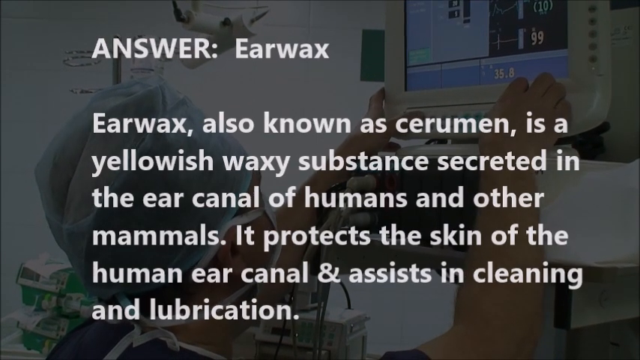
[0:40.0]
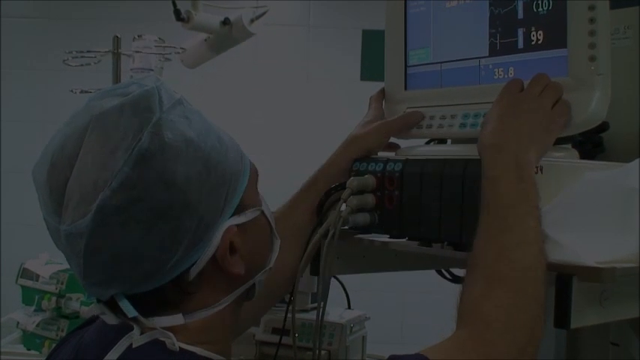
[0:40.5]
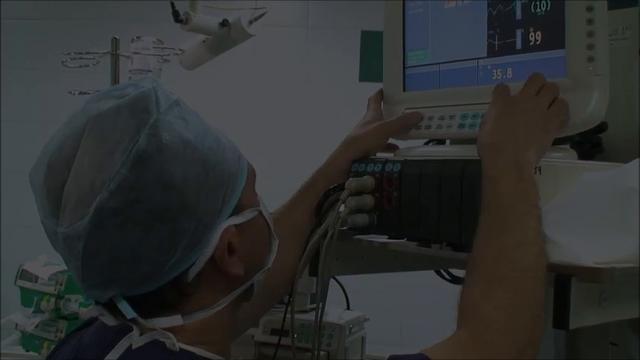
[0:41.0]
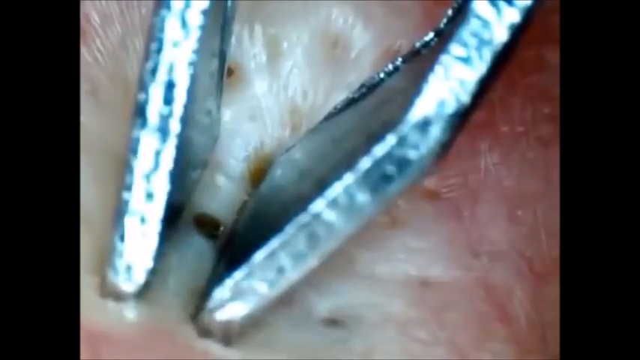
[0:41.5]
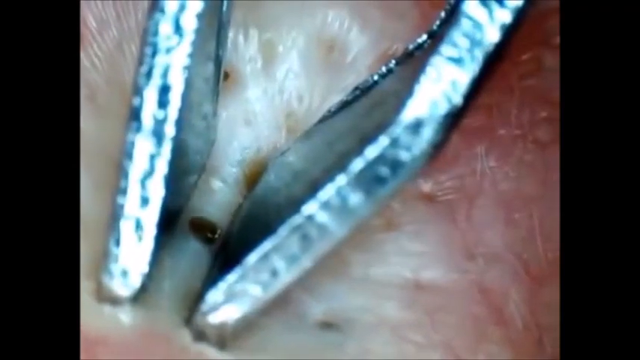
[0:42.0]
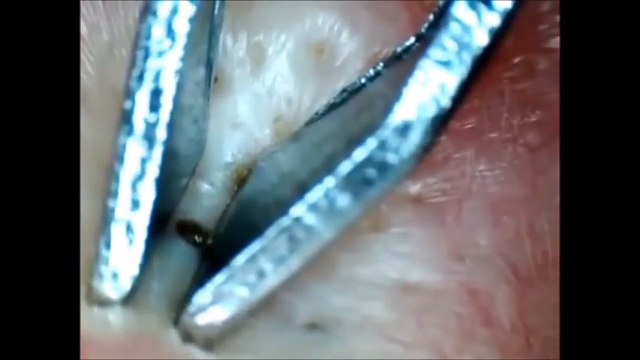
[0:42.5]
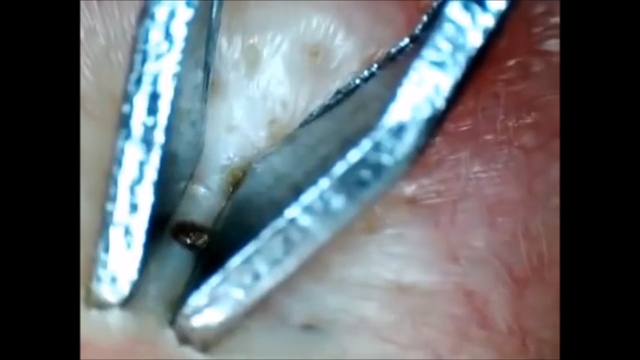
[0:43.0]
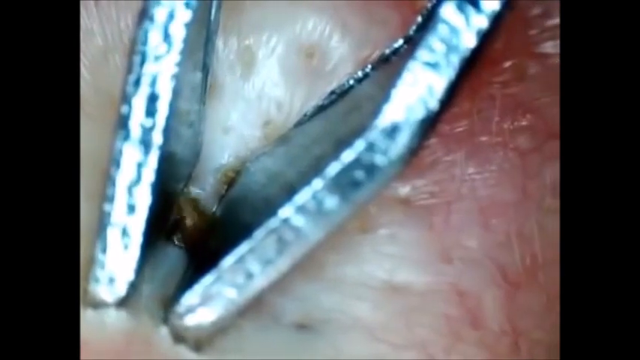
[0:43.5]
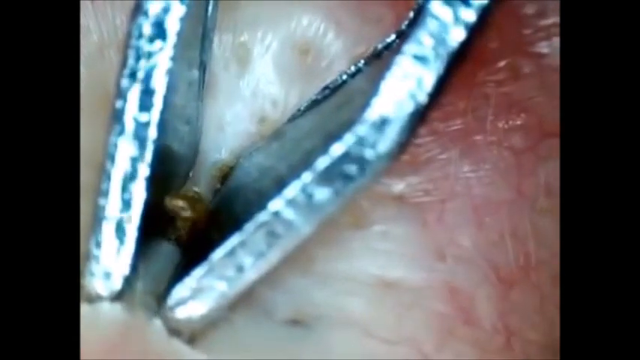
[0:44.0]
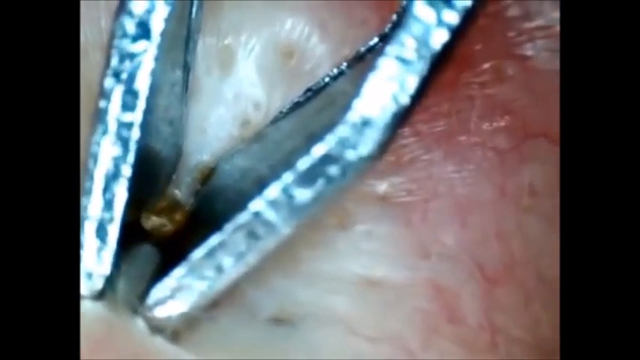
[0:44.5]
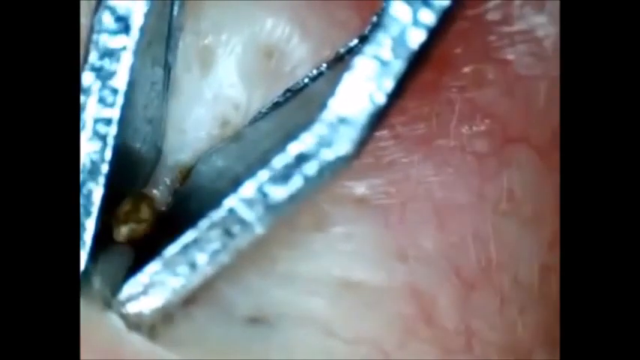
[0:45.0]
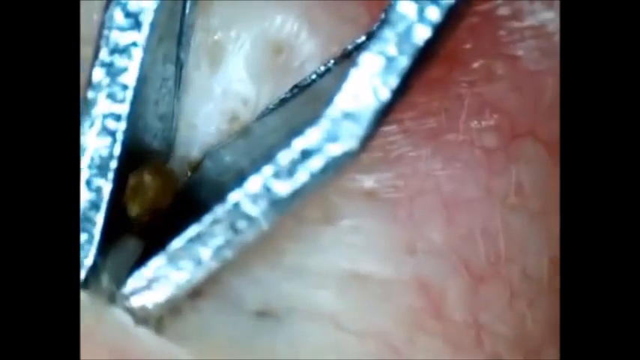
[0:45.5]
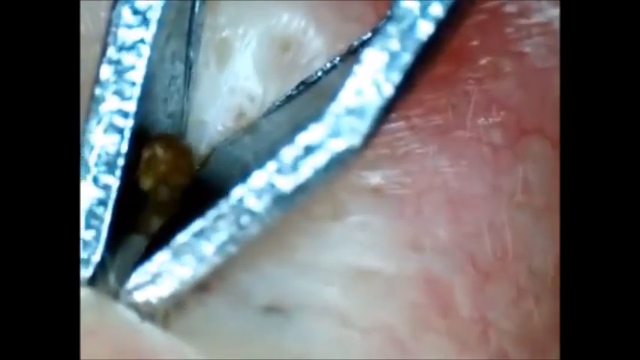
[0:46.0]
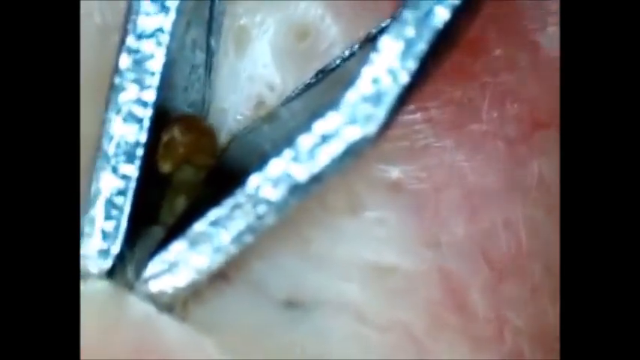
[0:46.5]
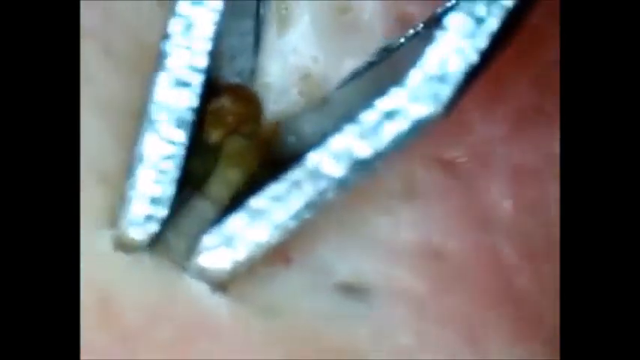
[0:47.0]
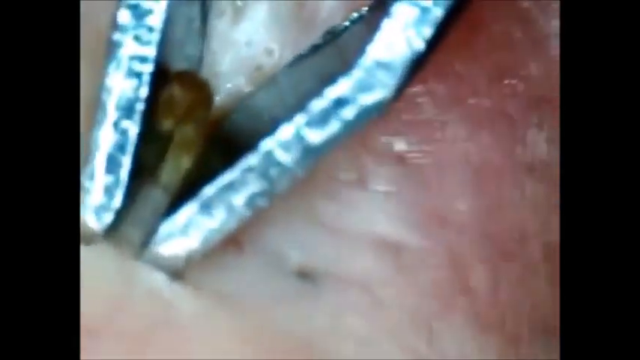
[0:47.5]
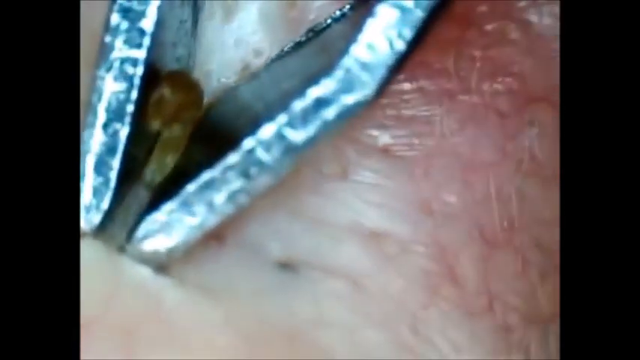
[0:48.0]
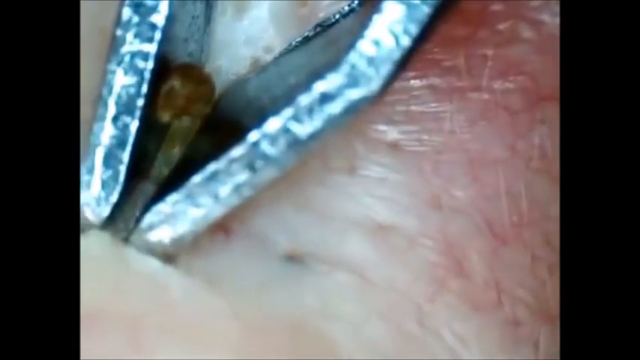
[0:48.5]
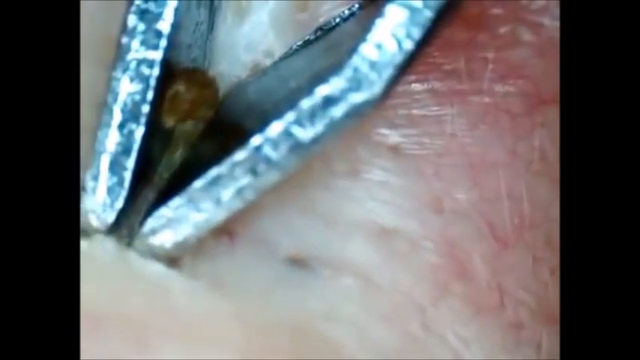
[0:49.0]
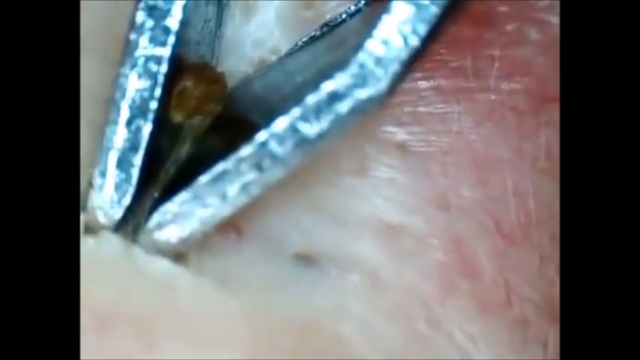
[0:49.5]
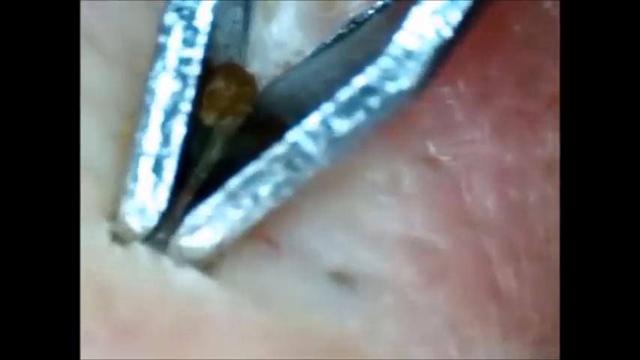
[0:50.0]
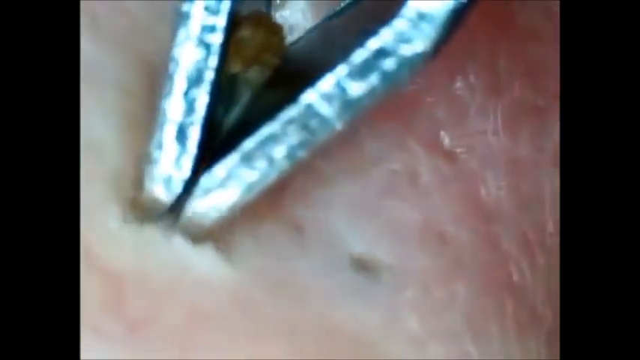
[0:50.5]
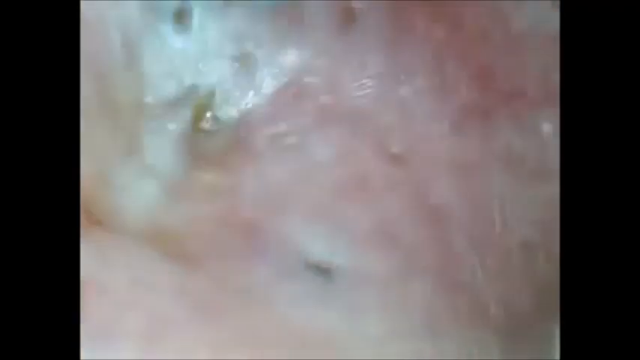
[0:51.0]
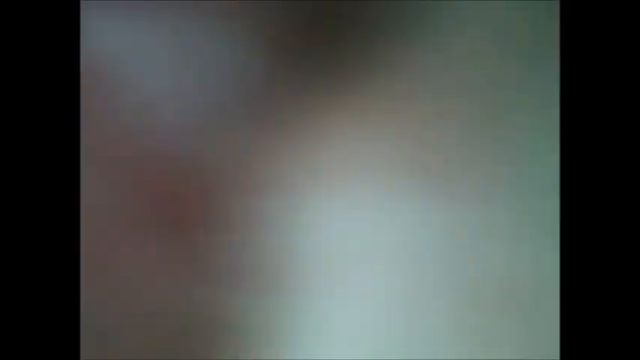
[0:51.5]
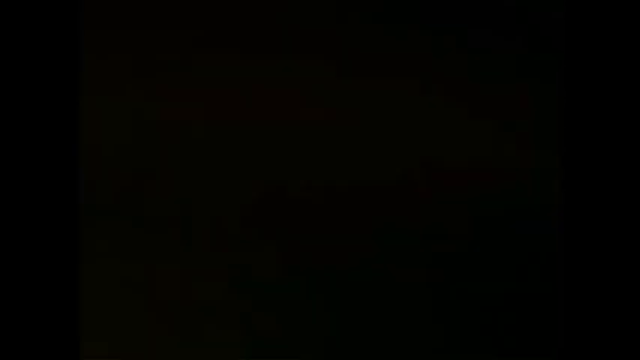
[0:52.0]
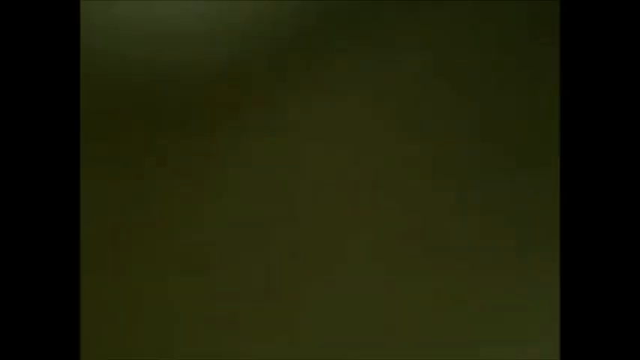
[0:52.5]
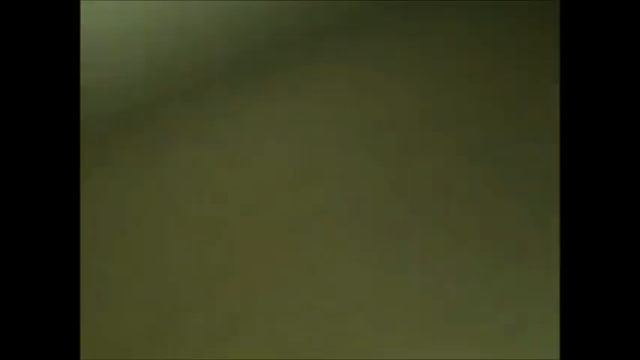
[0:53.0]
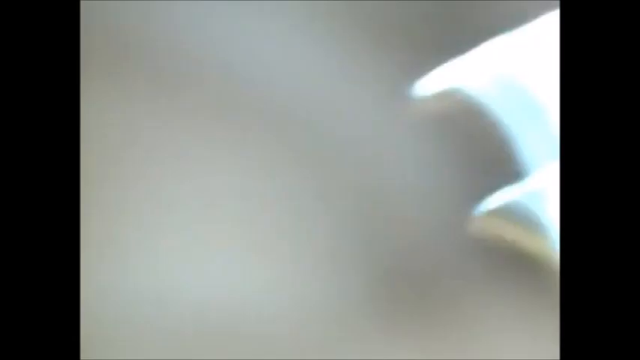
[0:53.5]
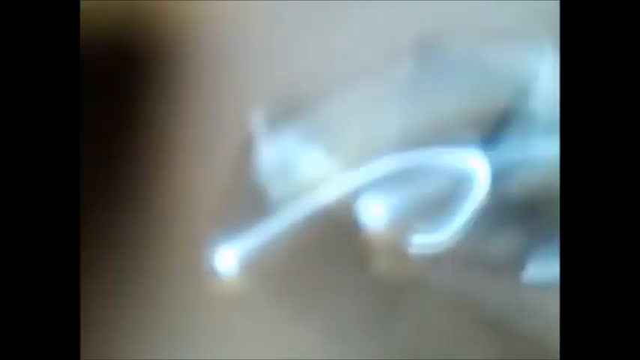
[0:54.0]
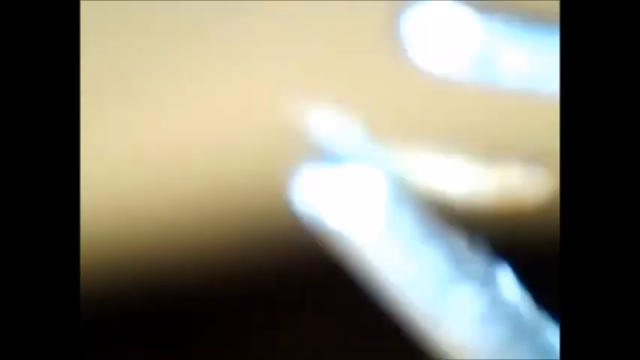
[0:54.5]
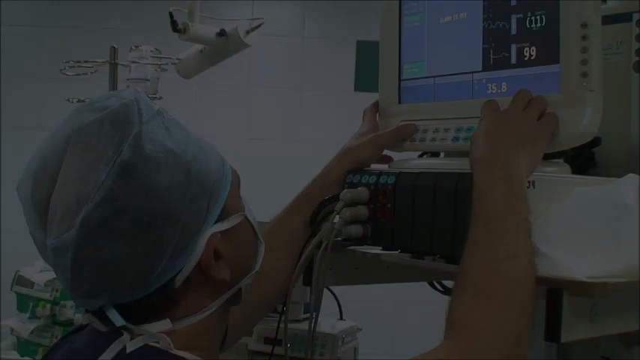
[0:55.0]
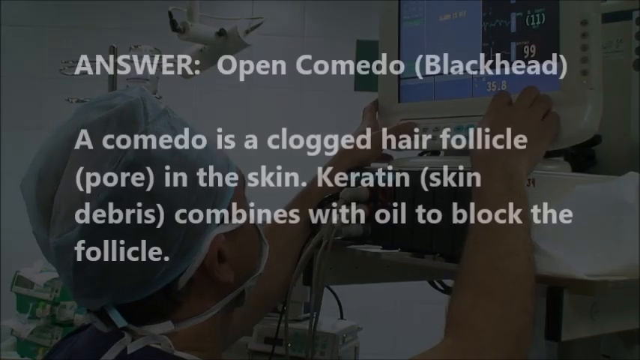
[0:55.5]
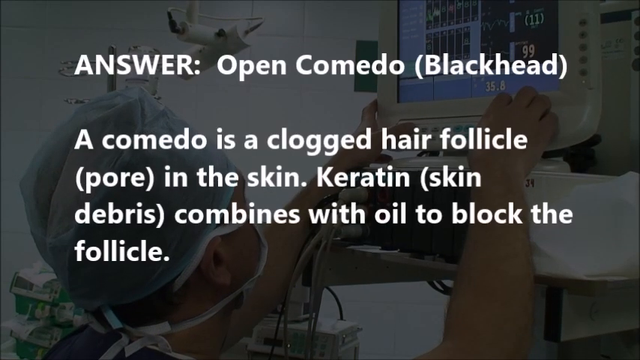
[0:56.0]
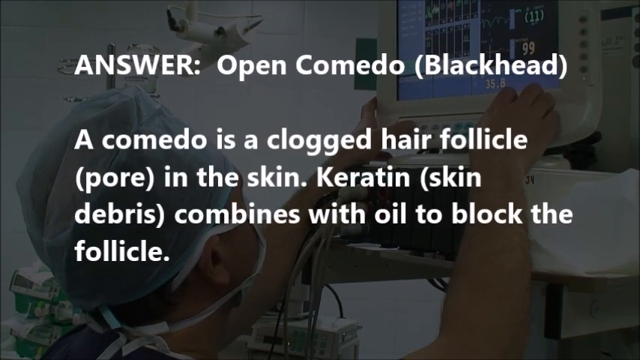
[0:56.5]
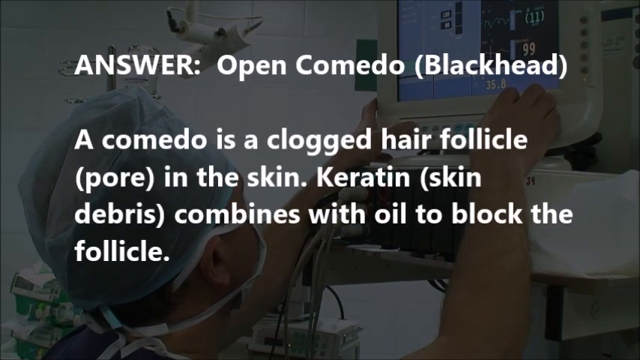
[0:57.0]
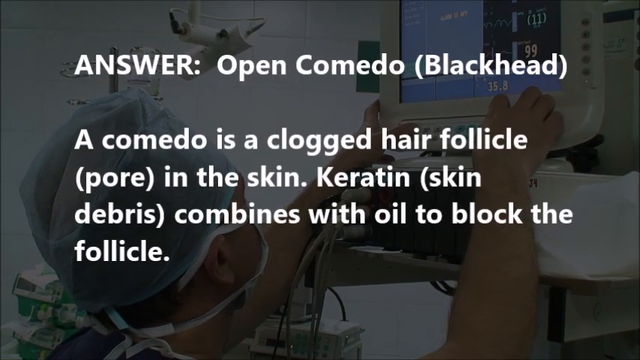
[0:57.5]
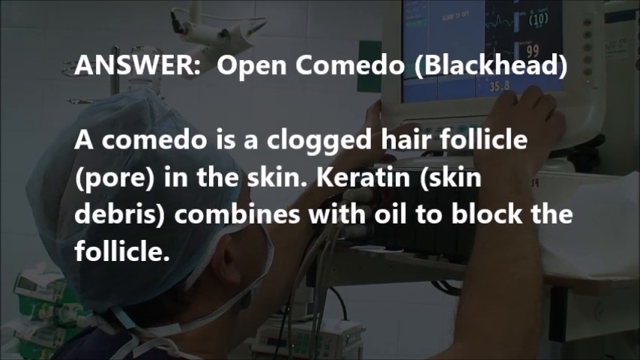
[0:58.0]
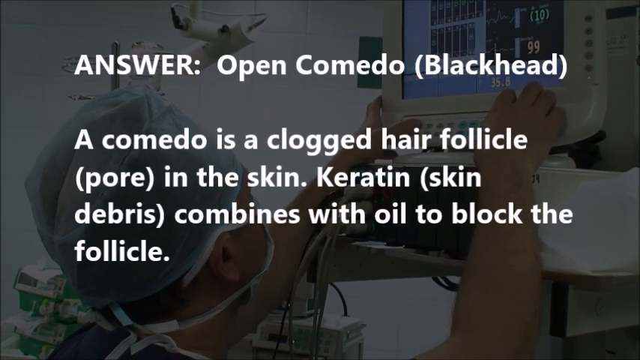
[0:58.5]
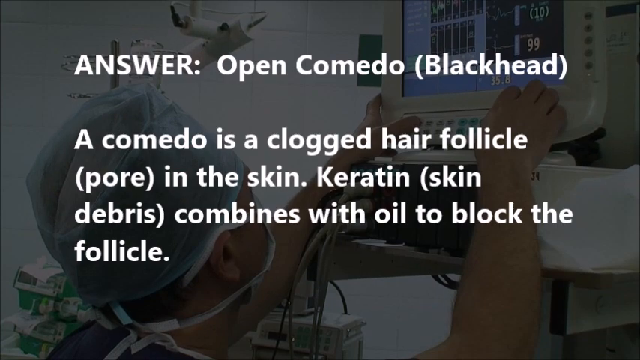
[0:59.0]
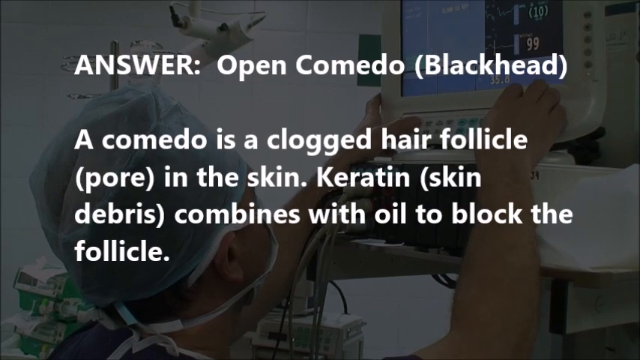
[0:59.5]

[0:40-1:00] After the earwax description, a close-up shows a pair of forceps or tweezers squeezing their ends together on skin with visible hair follicles. There is a black oval-shaped lump on the surface of the skin, which the tweezer ends are squeezing. A greeny-black substance comes from the lump, and a tube of greeny-black substance like toothpaste comes out of the skin. A substantial amount sits between the tweezer ends, which are then lifted from the skin. Another screen appears with the title "Answer open comedo blackhead" and the text "A comedo is a clogged hair follicle pore in the skin. Keratin skin debris combines with oil to block the follicle." Again the background shows a doctor in a surgical mask and hat with his hands raised up to the monitor.